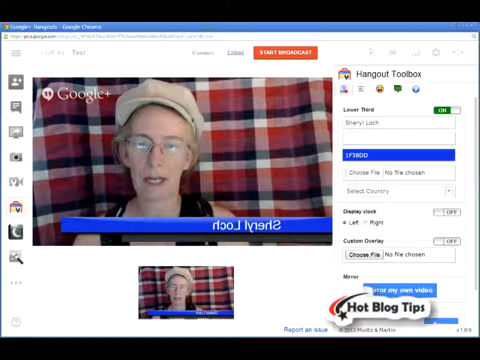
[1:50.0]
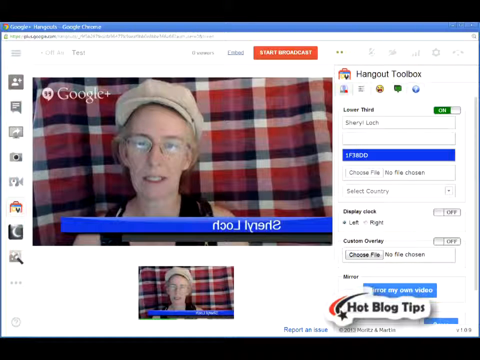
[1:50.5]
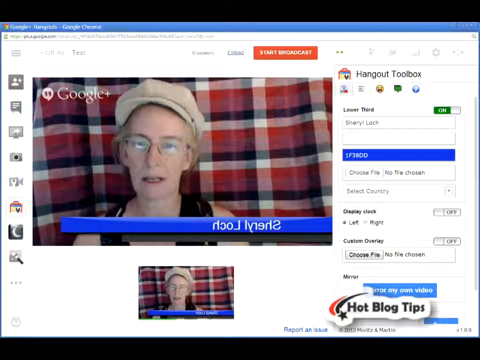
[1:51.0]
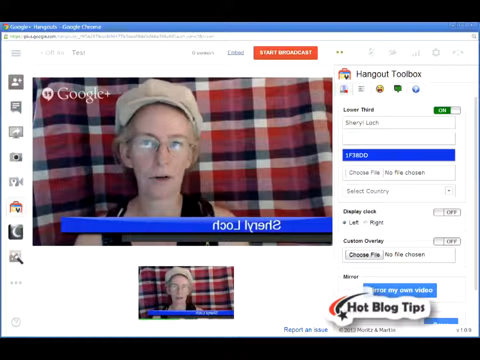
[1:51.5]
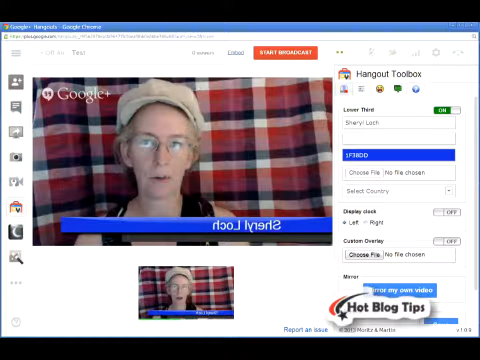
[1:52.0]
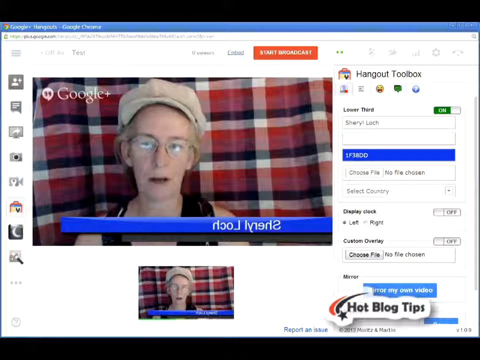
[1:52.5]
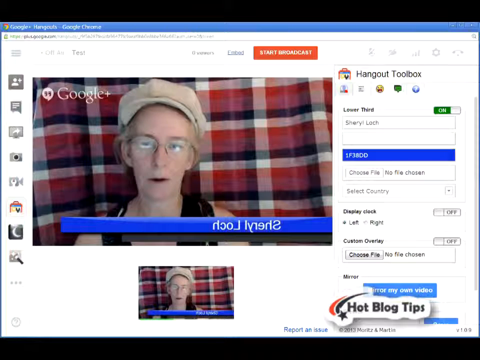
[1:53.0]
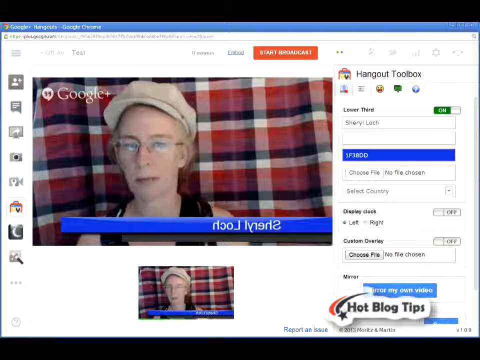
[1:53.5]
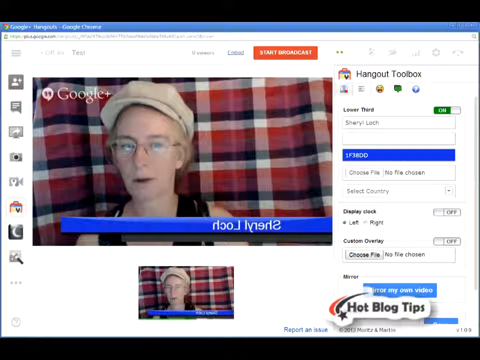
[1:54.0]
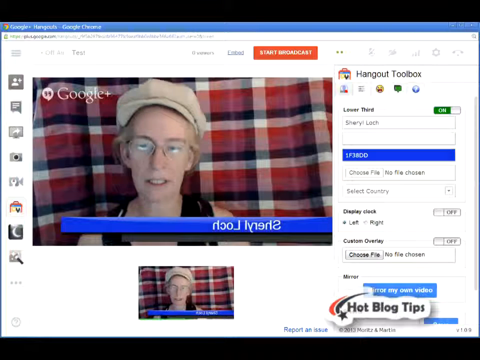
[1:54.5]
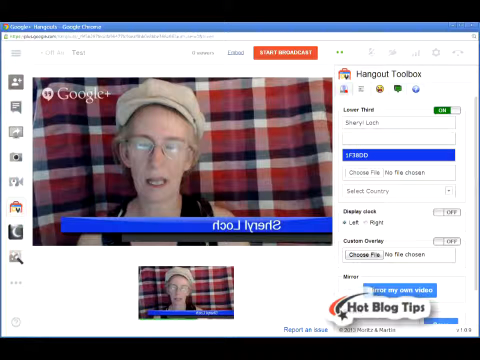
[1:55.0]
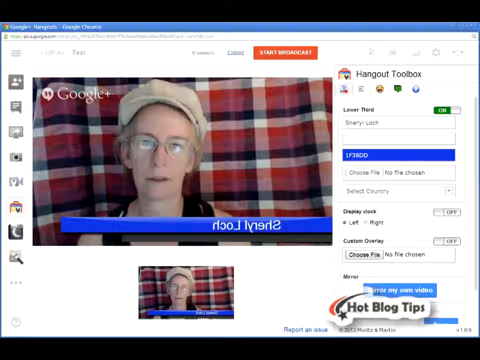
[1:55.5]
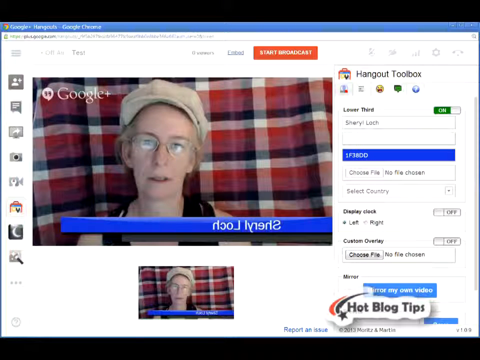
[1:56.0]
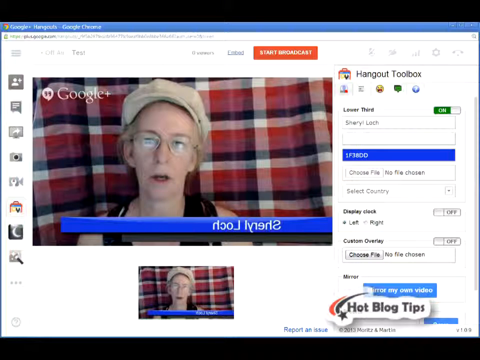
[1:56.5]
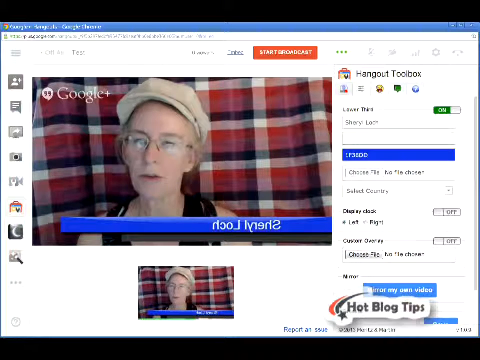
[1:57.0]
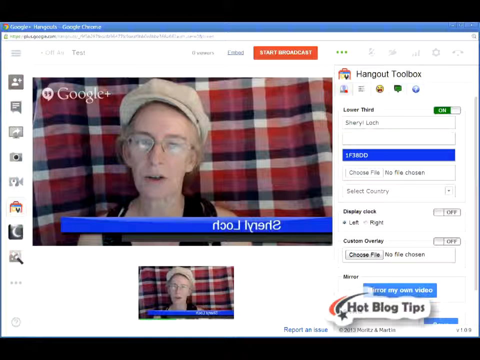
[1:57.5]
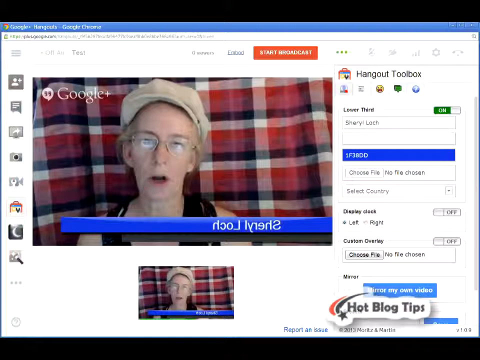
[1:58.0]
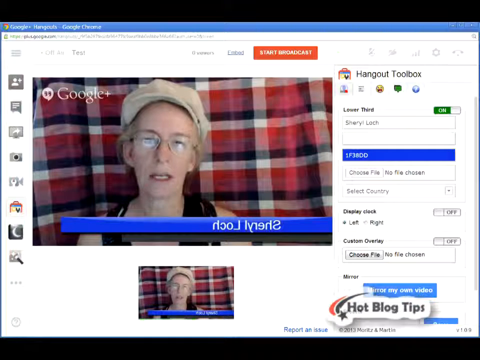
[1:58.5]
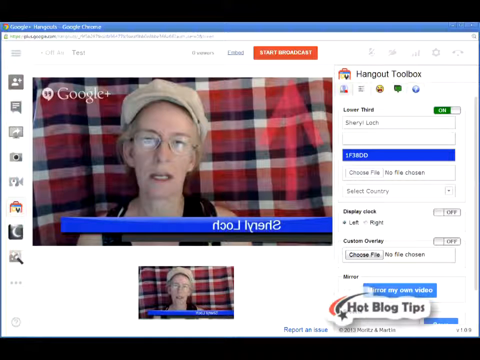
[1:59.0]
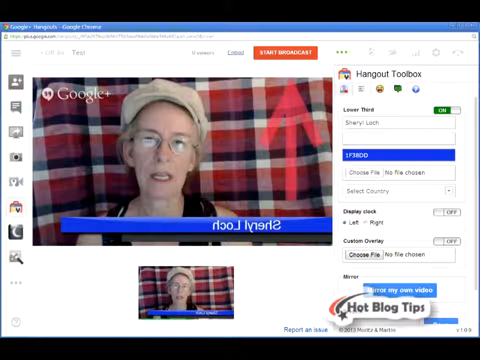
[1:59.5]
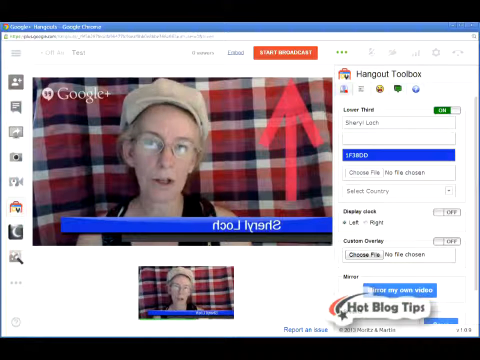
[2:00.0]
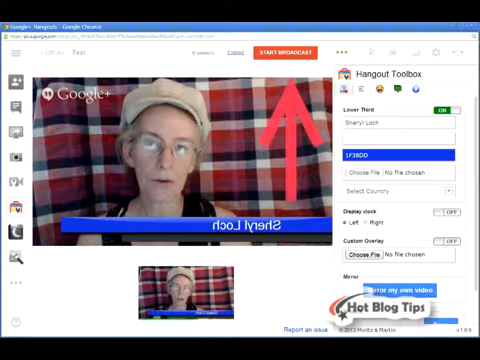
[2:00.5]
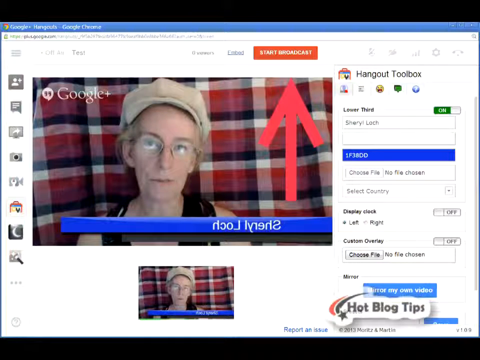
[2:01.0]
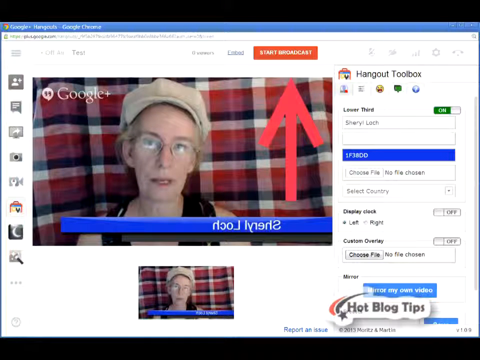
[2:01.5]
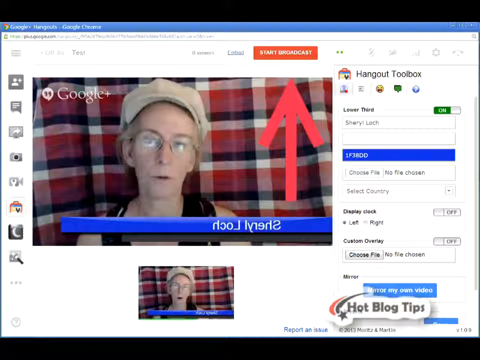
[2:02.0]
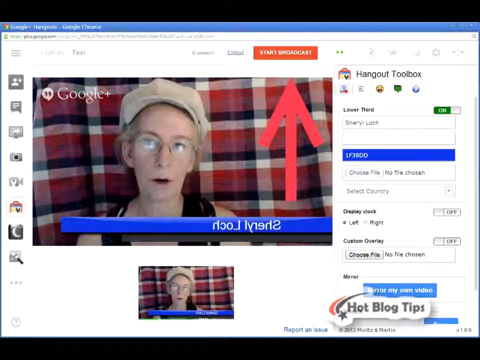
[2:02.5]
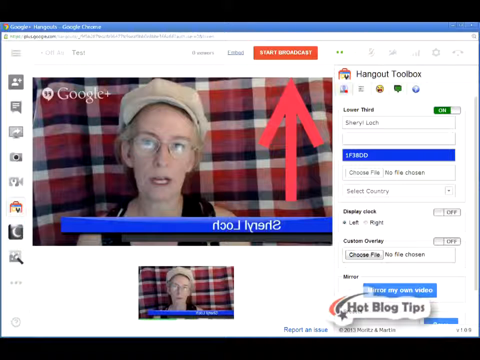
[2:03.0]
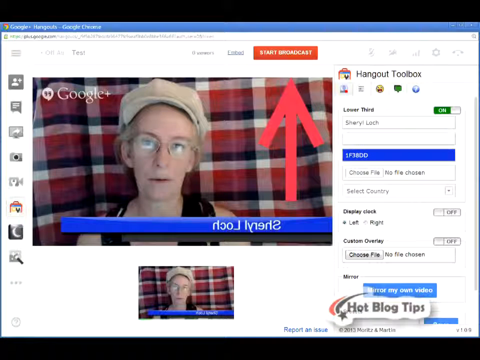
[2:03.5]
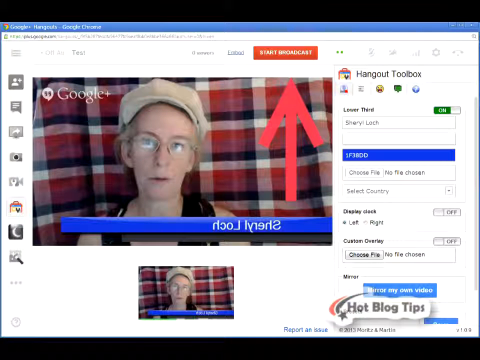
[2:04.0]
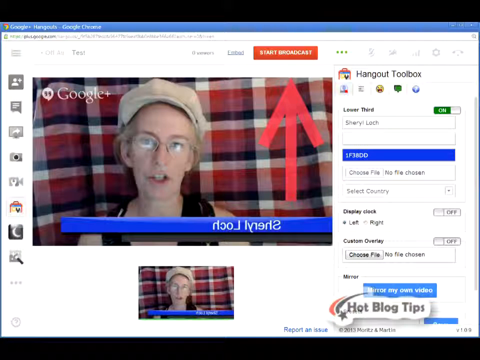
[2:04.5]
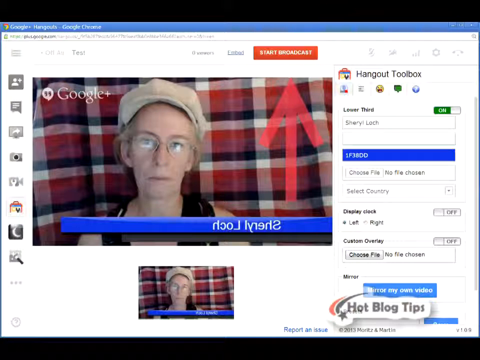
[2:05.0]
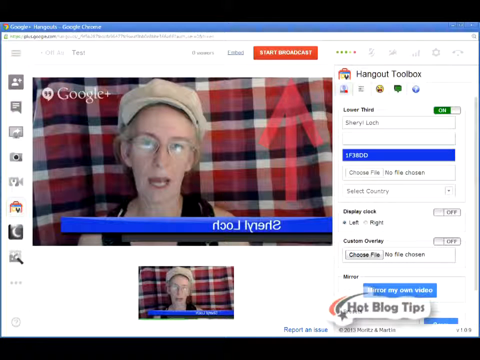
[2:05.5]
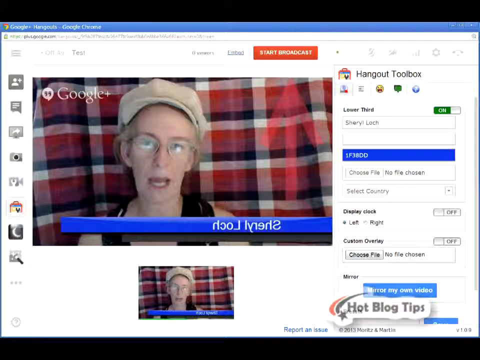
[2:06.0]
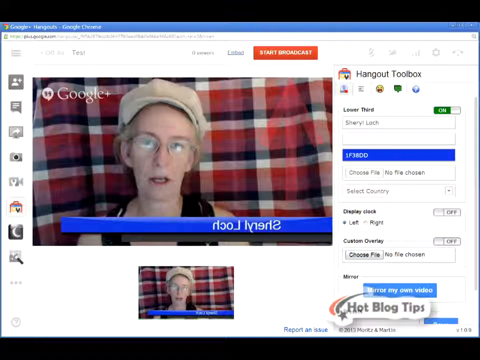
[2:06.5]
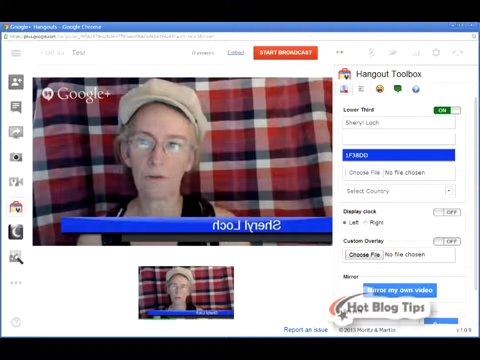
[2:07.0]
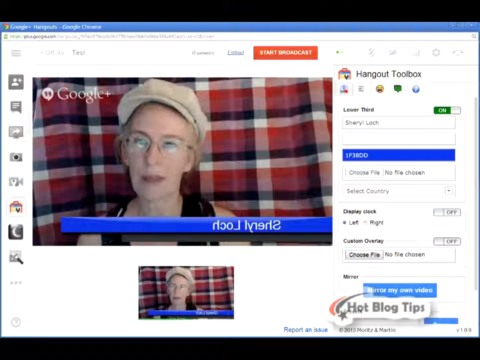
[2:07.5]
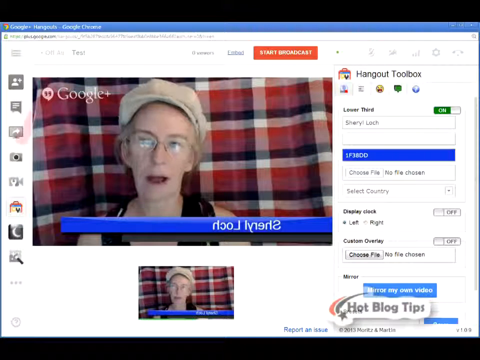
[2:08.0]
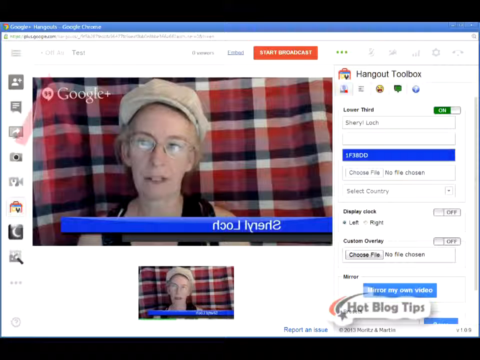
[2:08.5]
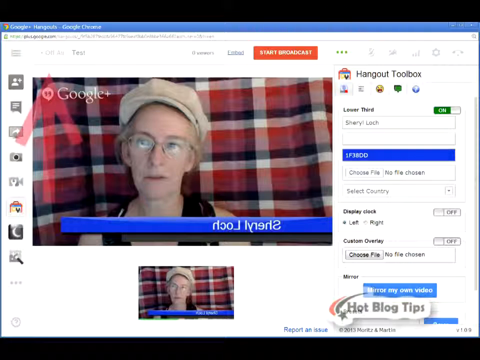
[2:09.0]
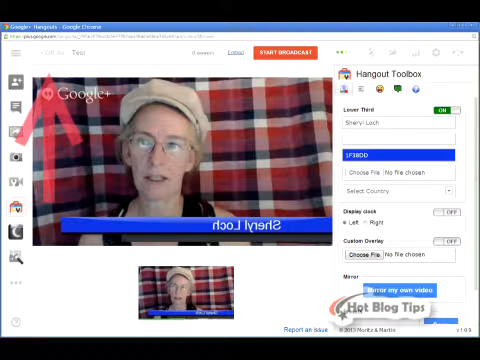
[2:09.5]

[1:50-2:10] The user is shown in her own video, wearing a hat, glasses and a black vest, against a red background. On the right is a panel labeled "Hangouts toolbox"; the video quality is poor and most of it is hard to read, though "lower third" and something with "clock" can be made out. At the bottom is "Custom Overlay" with options for choosing files. At the bottom is a logo reading "Hot Blog Tips" with a shooting star on the left. At the top of the screen is "Stop Broadcast," with a red arrow pointing upward to it, and another red arrow on the left points upward at something unclear. An avatar of the user is below the video.